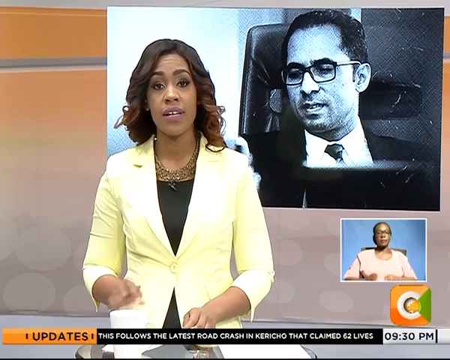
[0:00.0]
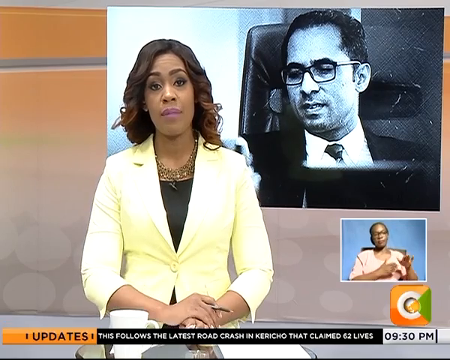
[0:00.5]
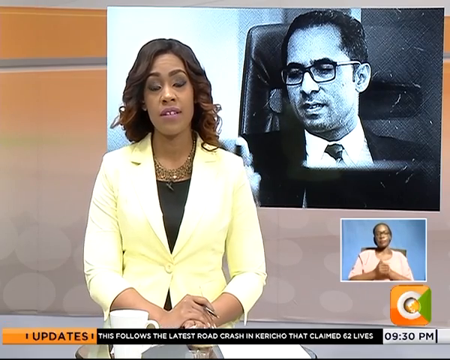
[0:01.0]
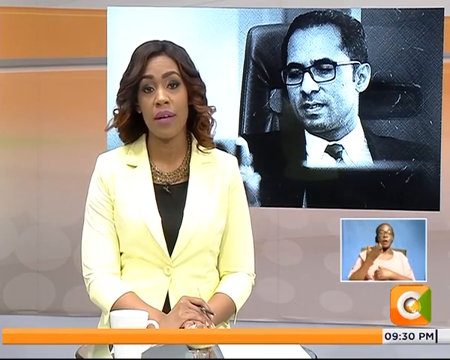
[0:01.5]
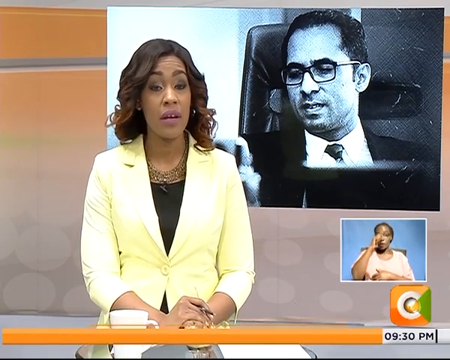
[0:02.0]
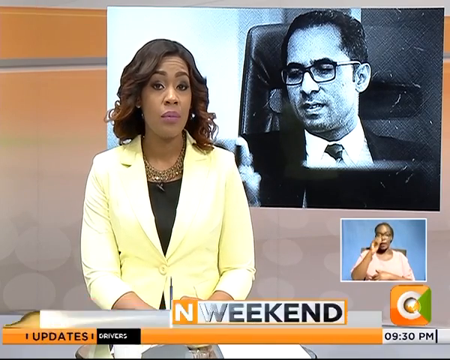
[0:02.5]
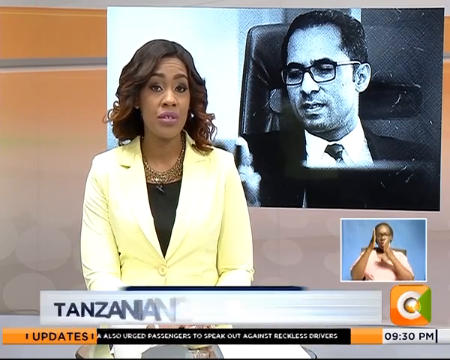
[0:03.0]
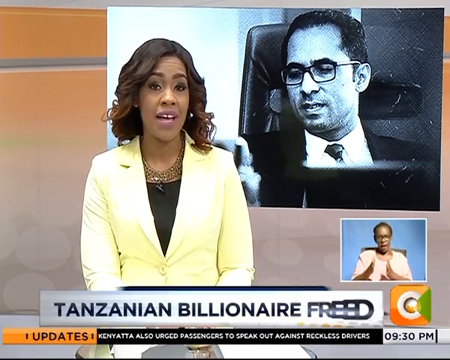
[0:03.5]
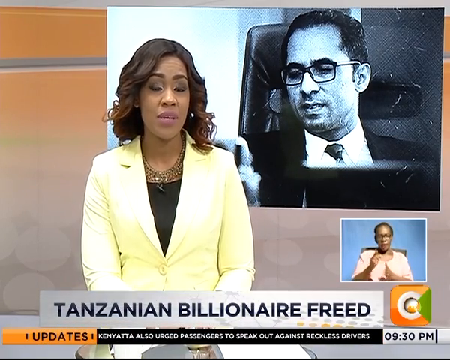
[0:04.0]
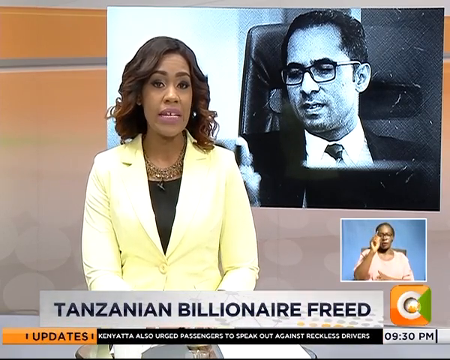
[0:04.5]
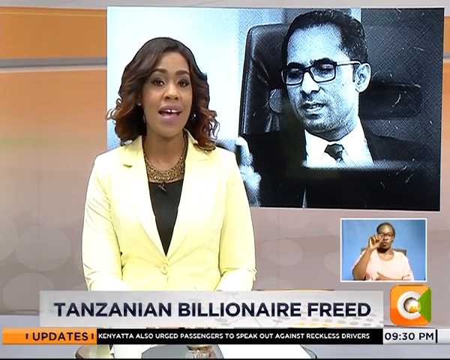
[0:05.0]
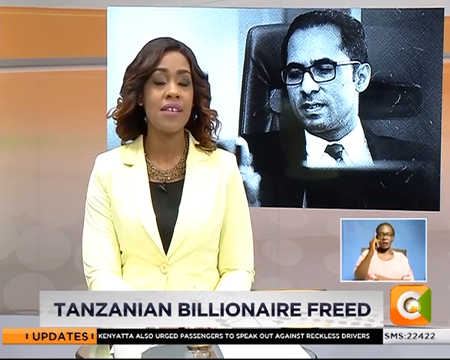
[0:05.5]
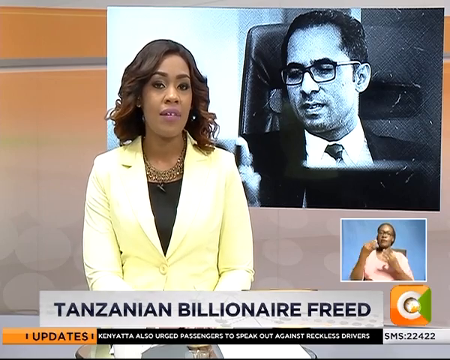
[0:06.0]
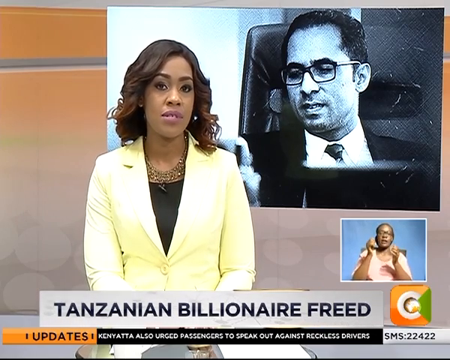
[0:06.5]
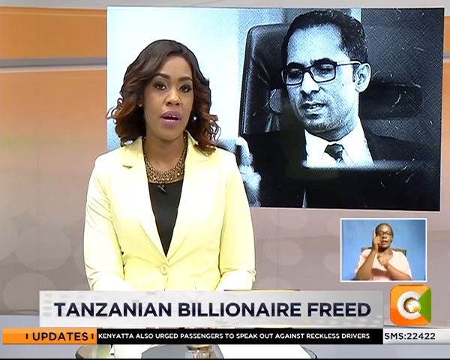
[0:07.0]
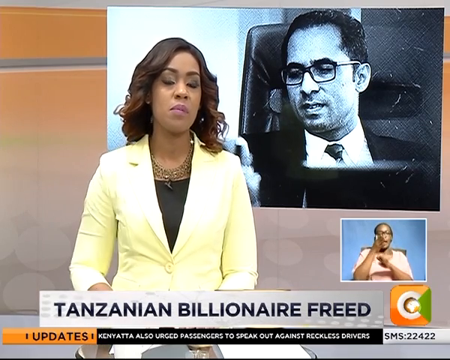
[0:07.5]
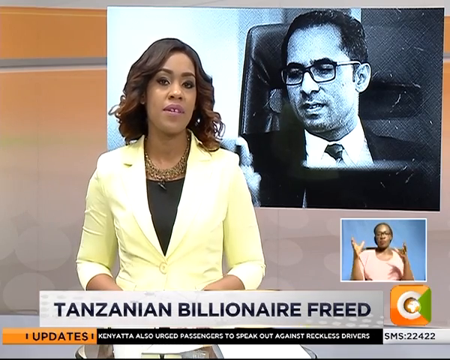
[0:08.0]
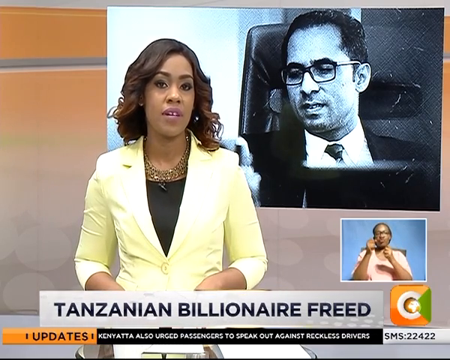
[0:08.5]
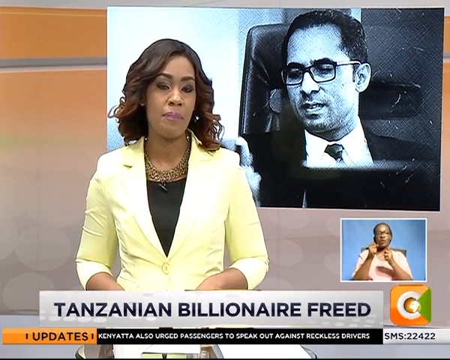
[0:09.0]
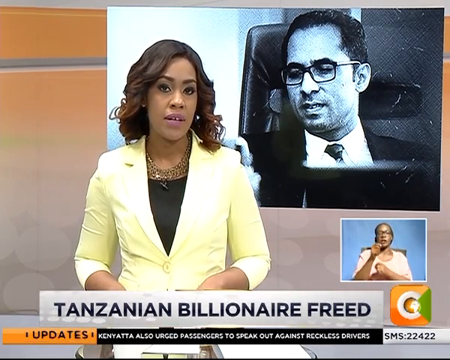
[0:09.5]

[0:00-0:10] A young female news anchor presents news updates concerning something that claimed 62 lives. In the corner there is a sign language presenter, and on-screen text reads "Tanzanian". At the top of the screen is a gentleman wearing a suit and spectacles, along with a picture of him. The time shown is 7.30pm.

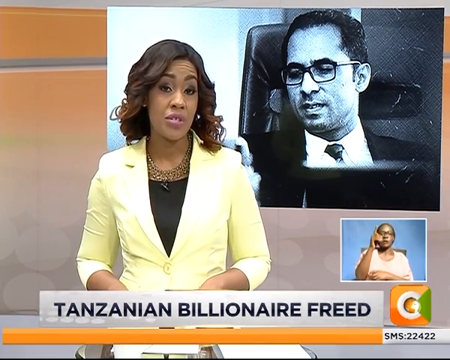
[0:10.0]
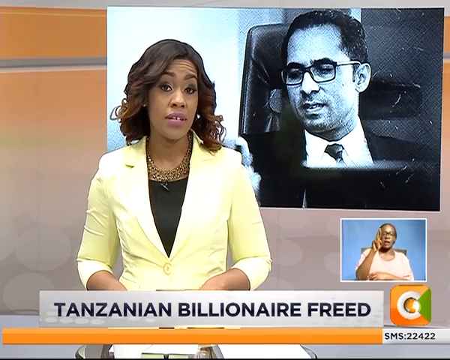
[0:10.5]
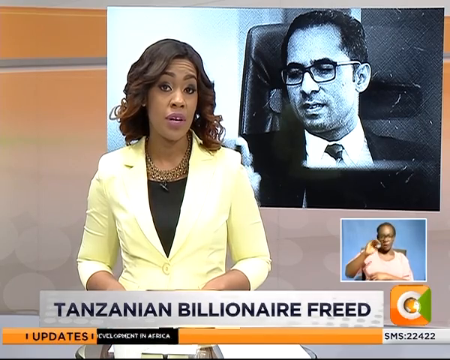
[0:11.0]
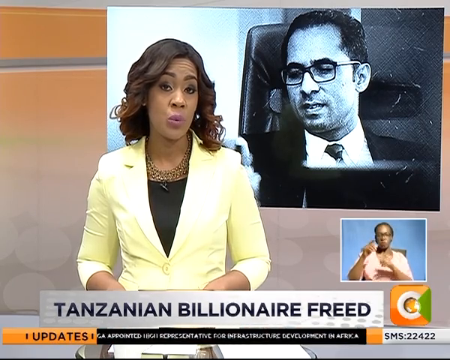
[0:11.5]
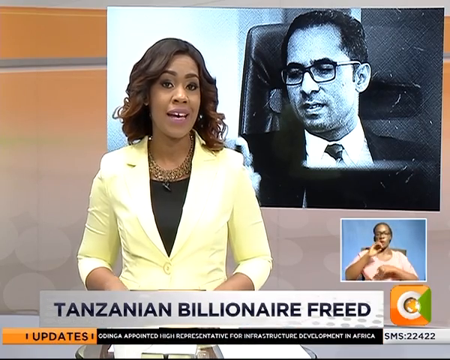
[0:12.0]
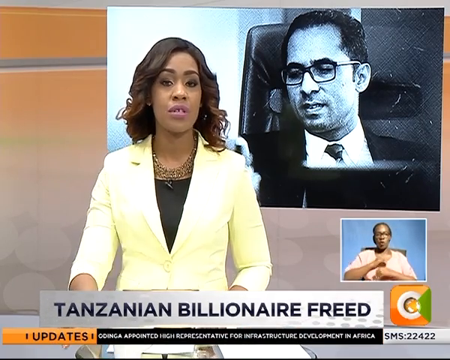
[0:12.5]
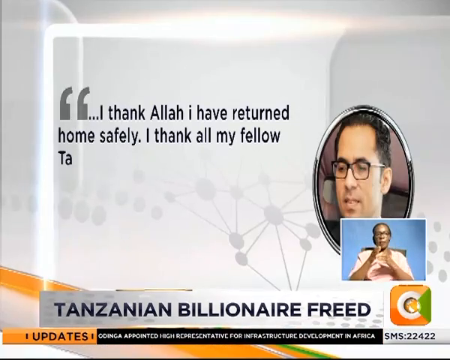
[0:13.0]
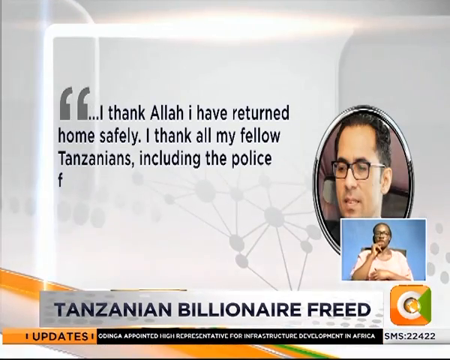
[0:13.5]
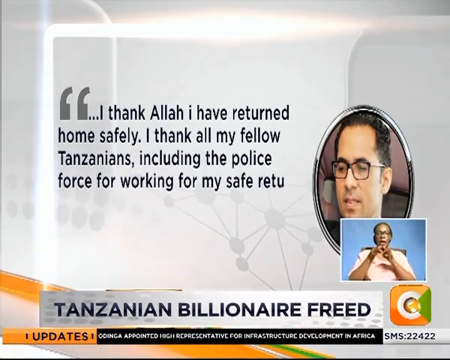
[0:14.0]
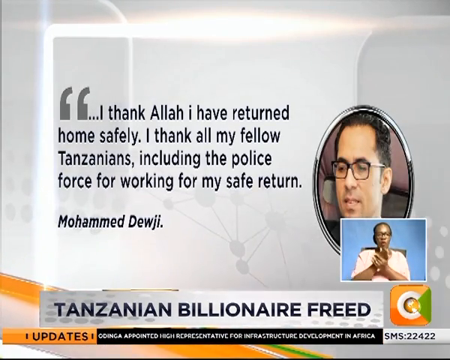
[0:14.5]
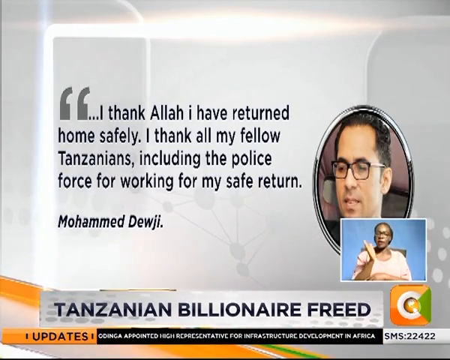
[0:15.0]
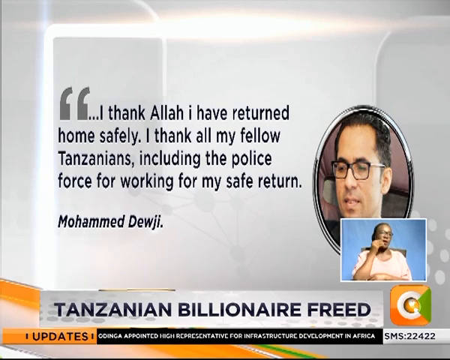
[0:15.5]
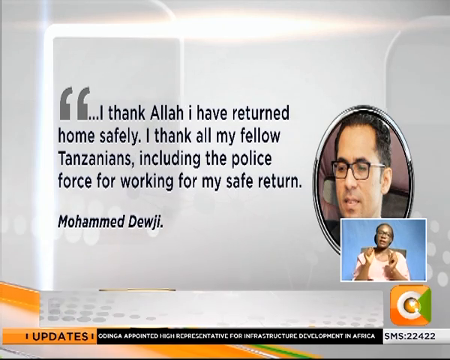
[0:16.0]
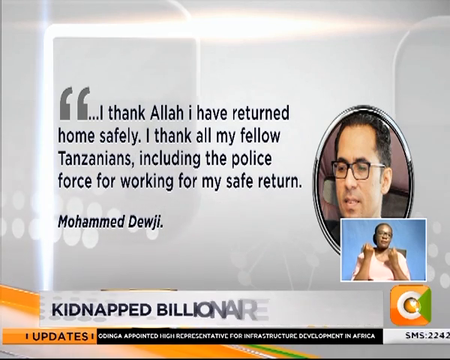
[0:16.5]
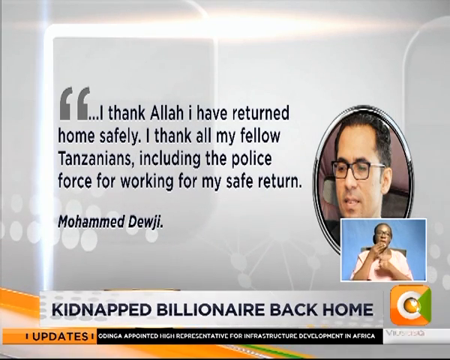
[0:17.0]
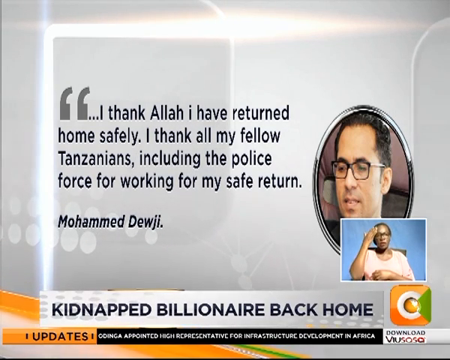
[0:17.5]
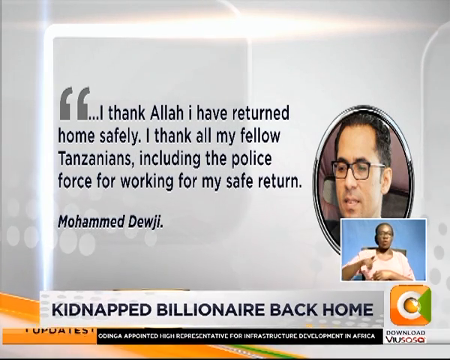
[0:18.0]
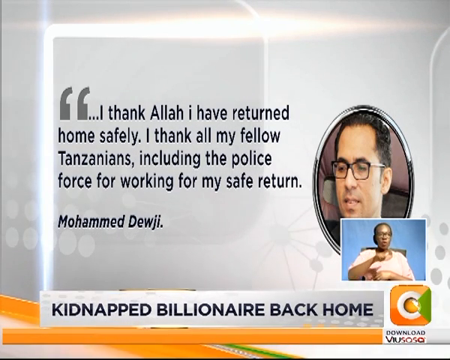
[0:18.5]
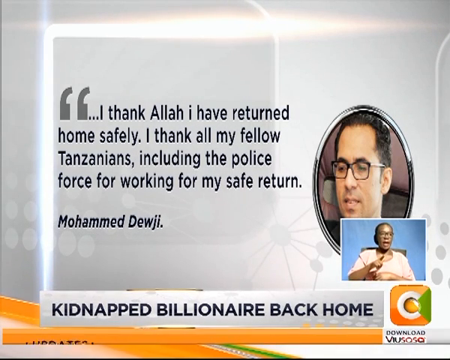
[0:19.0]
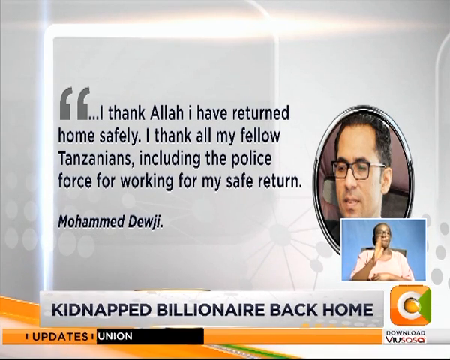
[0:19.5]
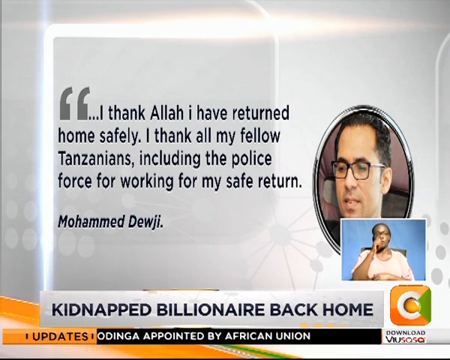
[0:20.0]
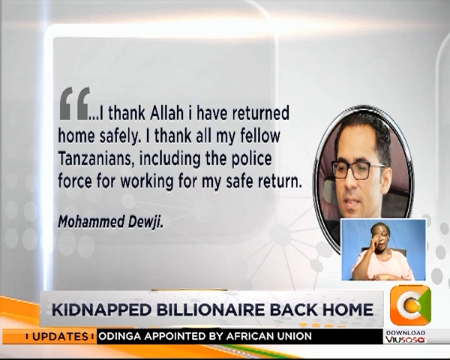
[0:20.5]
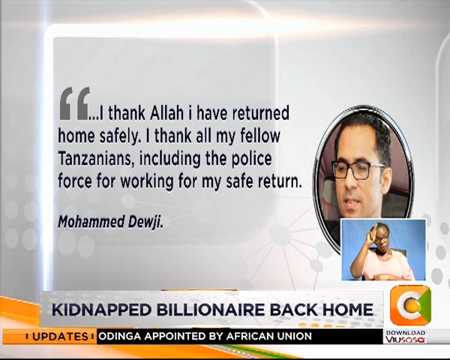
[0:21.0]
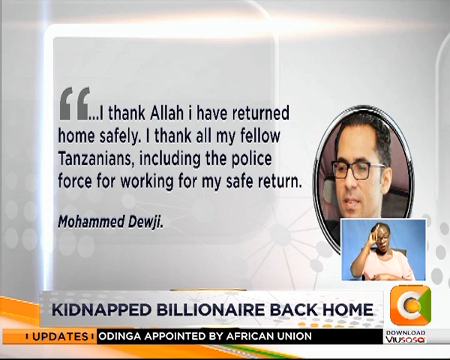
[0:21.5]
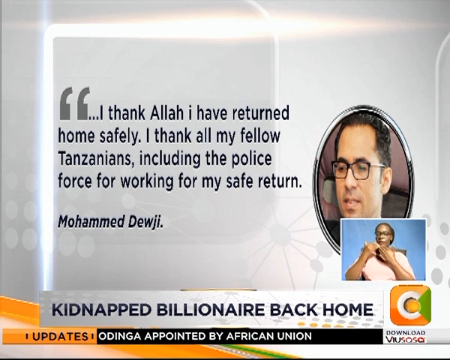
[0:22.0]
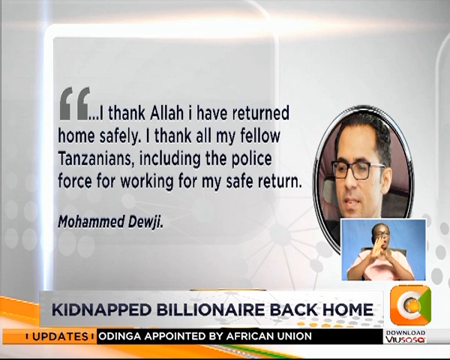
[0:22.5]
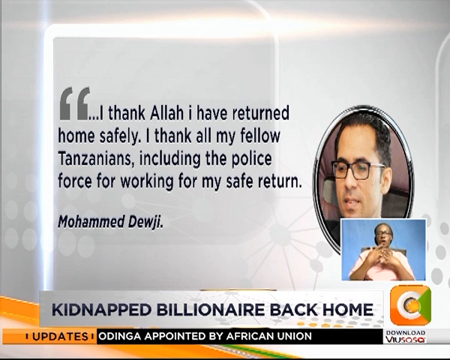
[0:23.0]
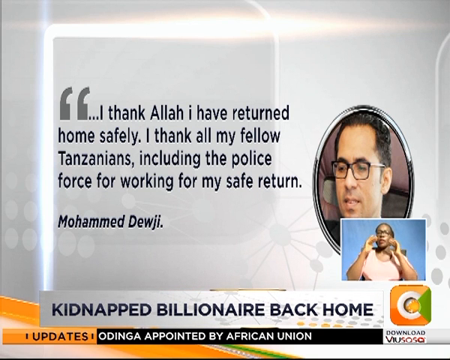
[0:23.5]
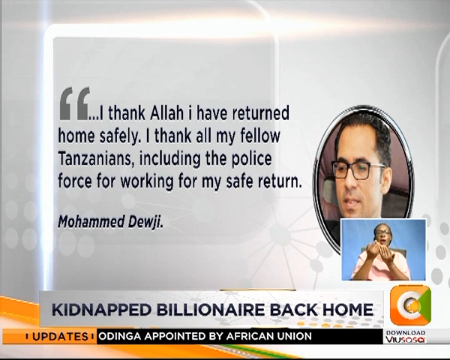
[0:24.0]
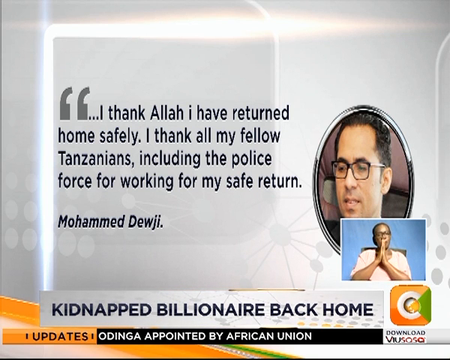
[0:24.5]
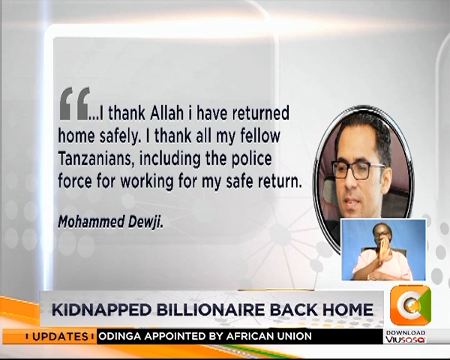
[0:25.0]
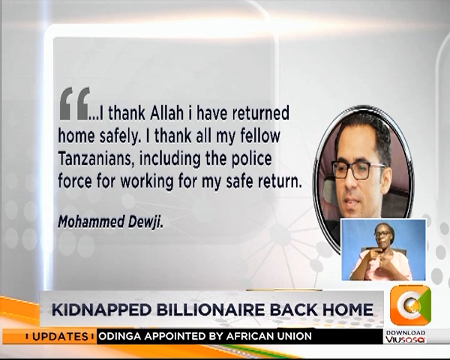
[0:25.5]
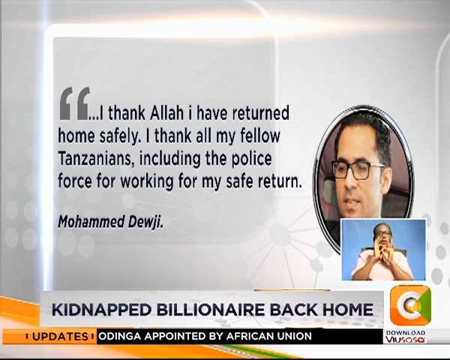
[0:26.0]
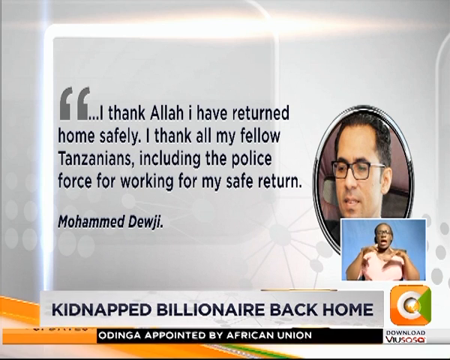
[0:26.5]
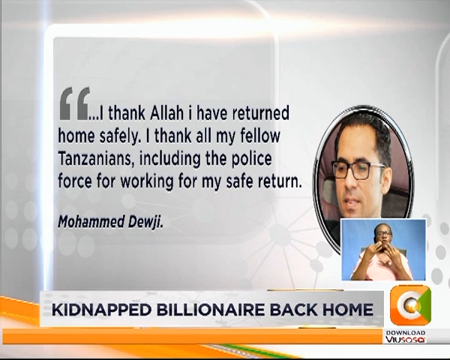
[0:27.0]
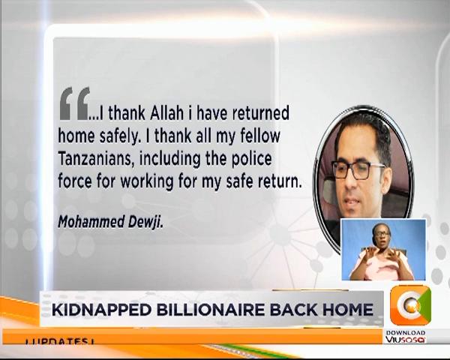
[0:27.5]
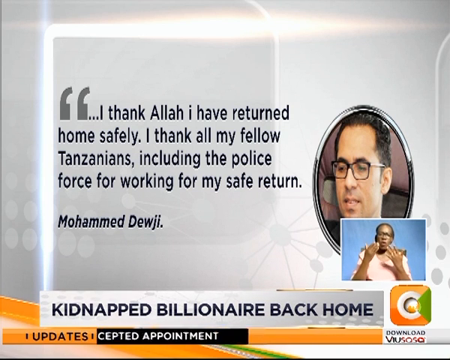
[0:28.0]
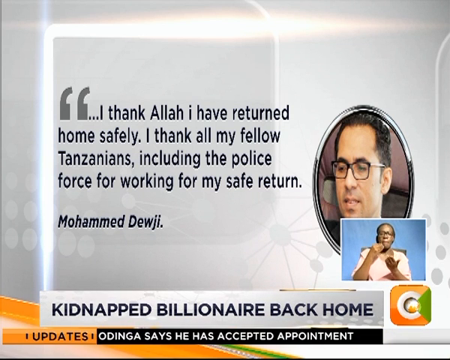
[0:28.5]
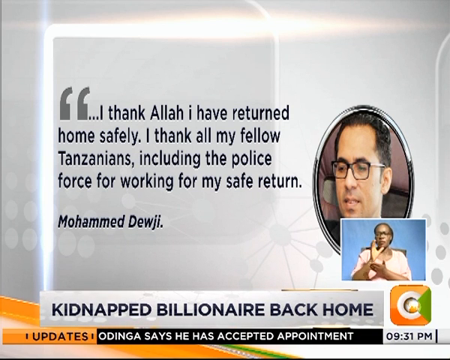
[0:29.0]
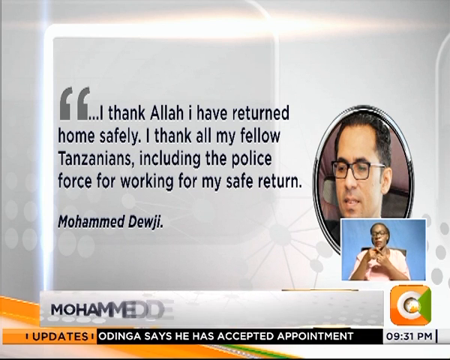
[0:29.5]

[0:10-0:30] The news report covers a Tanzanian billionaire. On-screen text reads "I thank Allah I have returned home safely. I thank all my fellow Tanzanians, the police force for", followed by text naming Muhammad Dilici, a Tanzanian billionaire, and stating that a kidnapped billionaire is back home. The headline concerns the billionaire who was kidnapped, who thanks the people of his country and the police for his safe return. A sign language interpreter appears at the bottom, and then an SMS sign with a number for comments is shown.